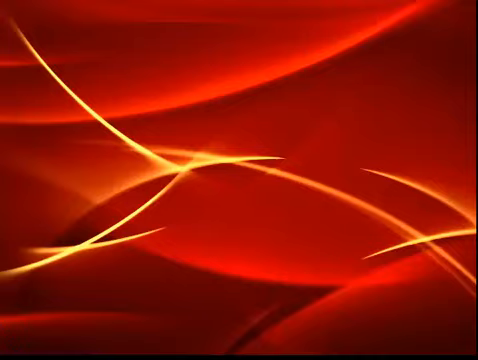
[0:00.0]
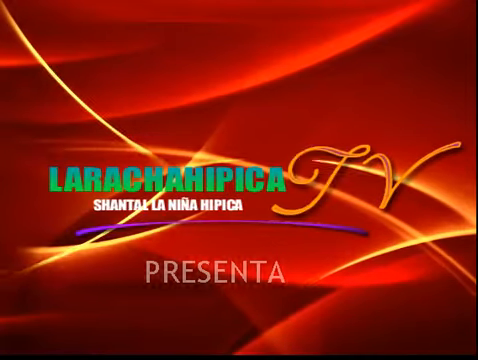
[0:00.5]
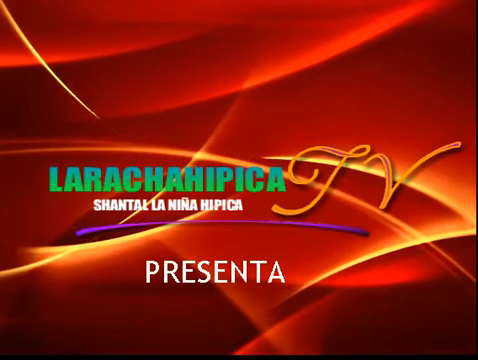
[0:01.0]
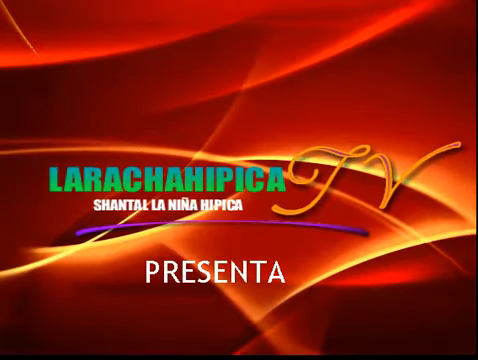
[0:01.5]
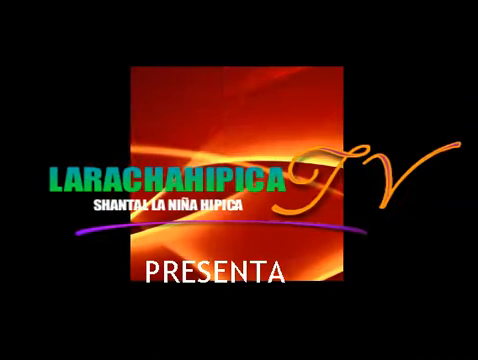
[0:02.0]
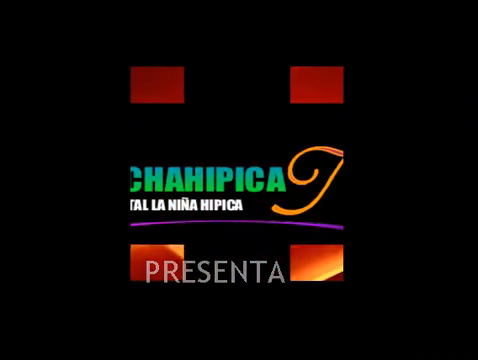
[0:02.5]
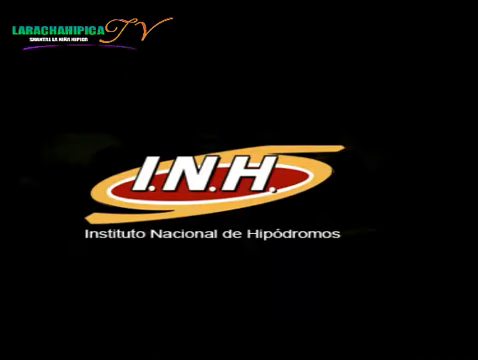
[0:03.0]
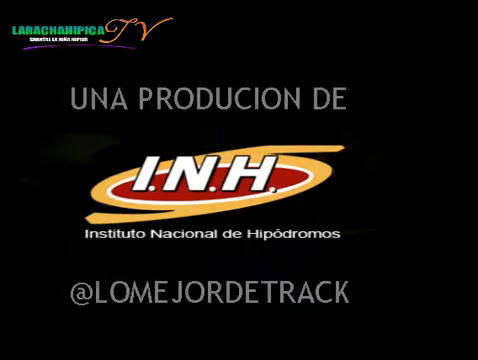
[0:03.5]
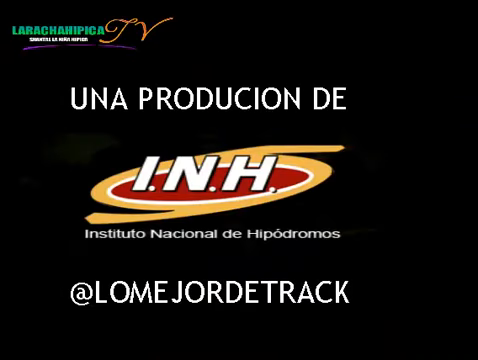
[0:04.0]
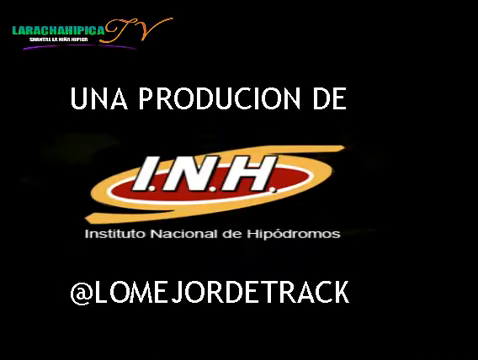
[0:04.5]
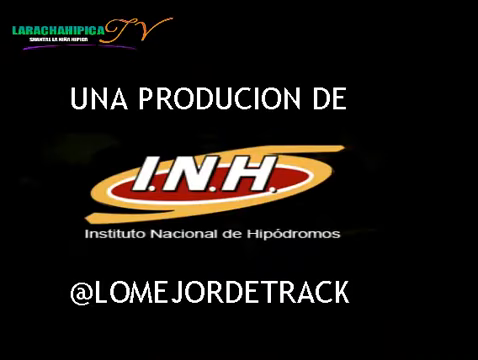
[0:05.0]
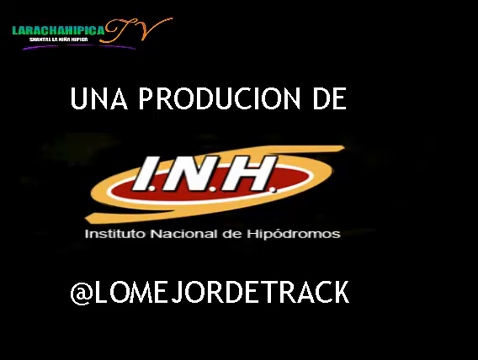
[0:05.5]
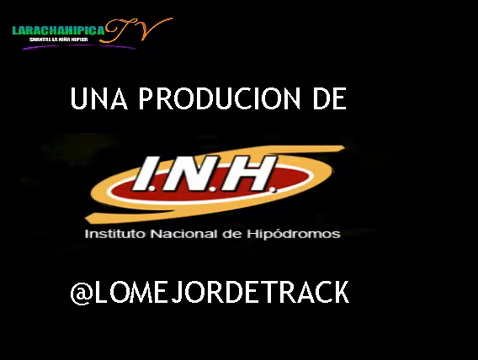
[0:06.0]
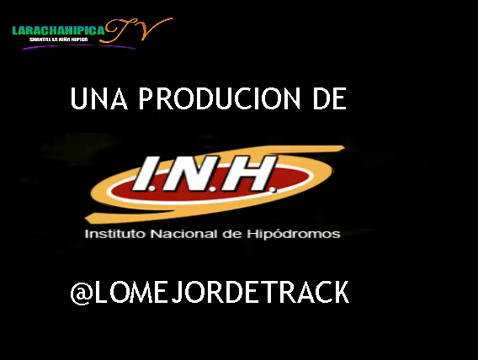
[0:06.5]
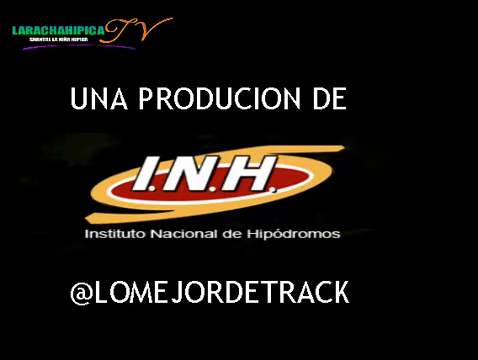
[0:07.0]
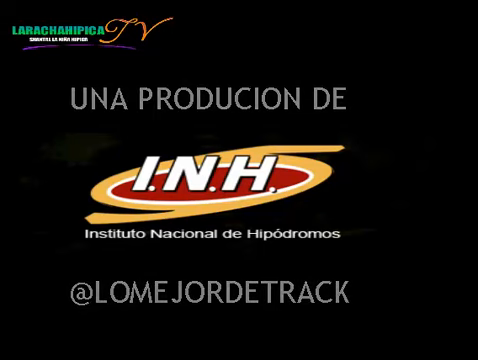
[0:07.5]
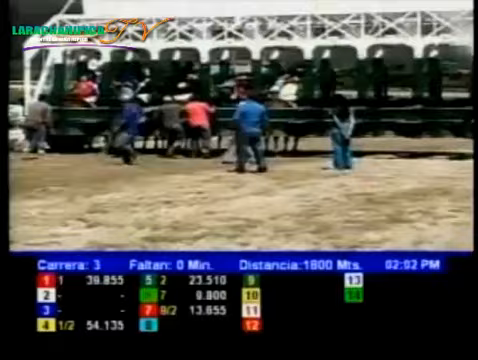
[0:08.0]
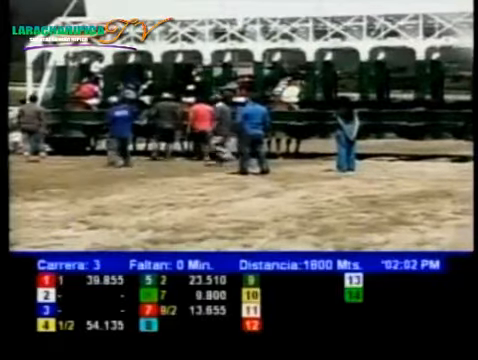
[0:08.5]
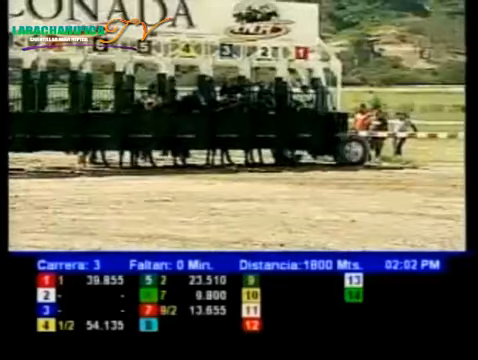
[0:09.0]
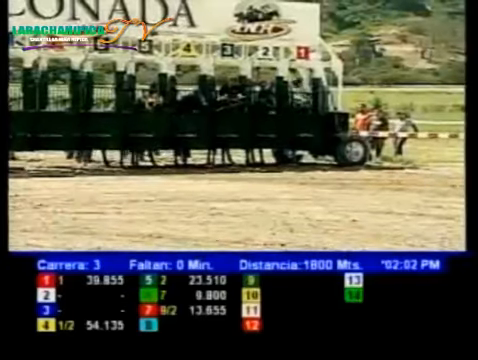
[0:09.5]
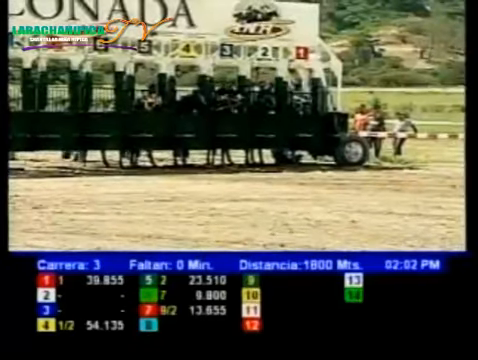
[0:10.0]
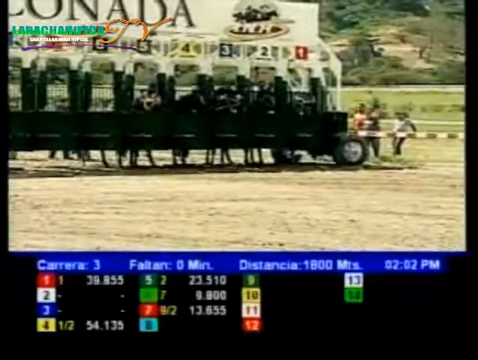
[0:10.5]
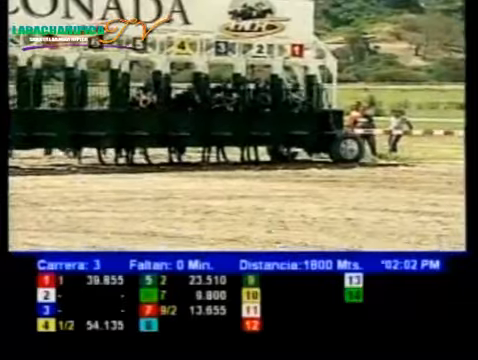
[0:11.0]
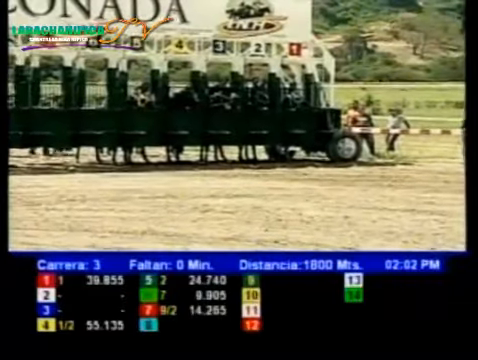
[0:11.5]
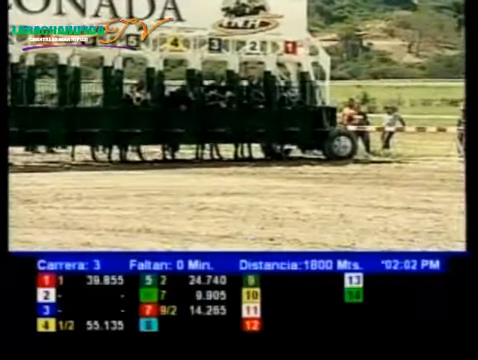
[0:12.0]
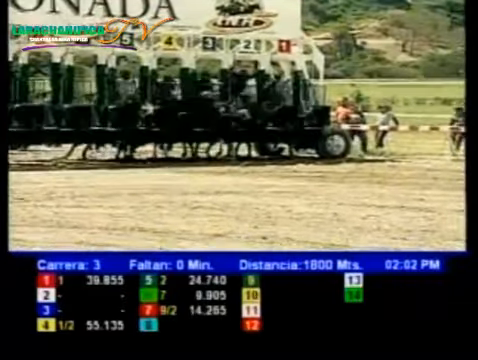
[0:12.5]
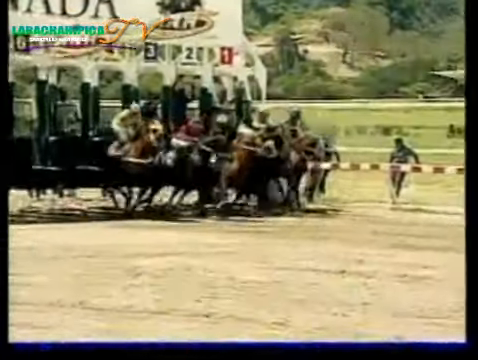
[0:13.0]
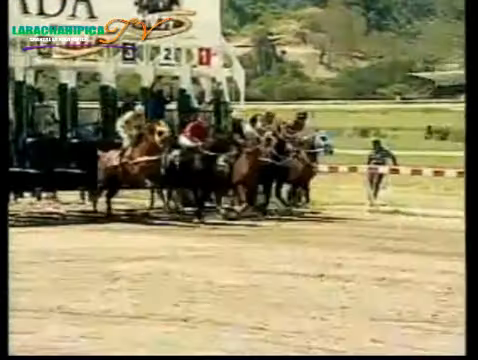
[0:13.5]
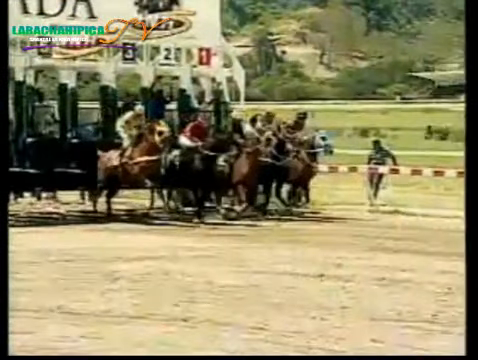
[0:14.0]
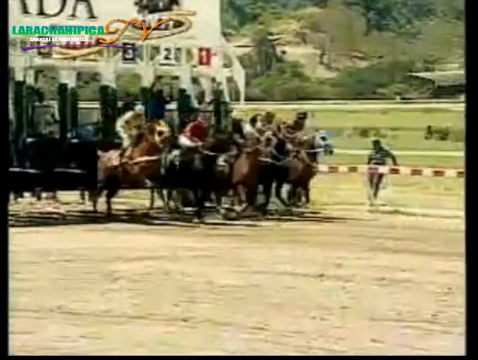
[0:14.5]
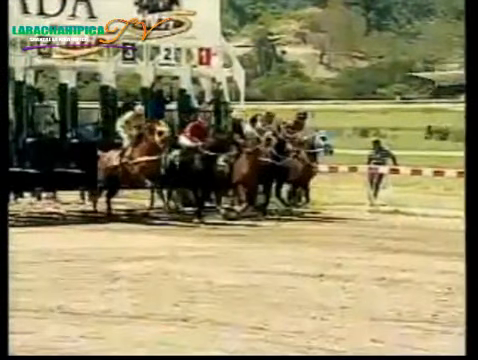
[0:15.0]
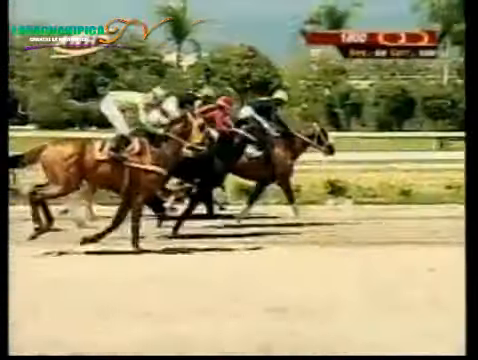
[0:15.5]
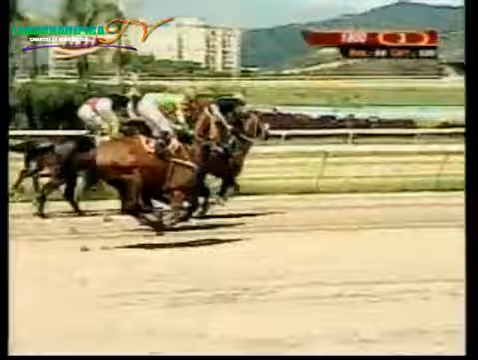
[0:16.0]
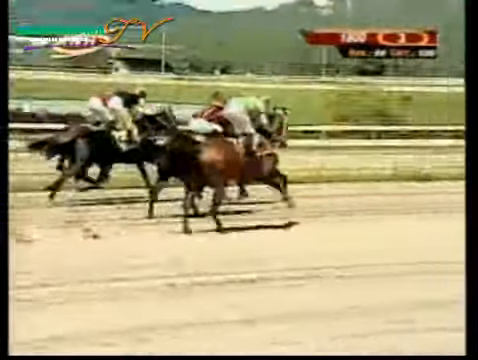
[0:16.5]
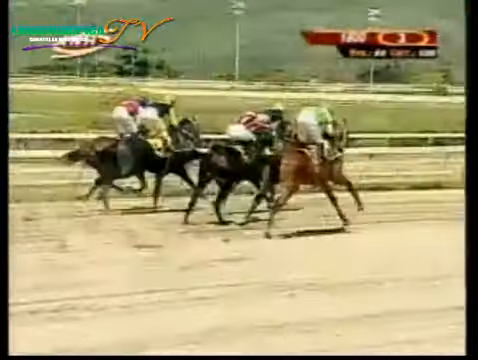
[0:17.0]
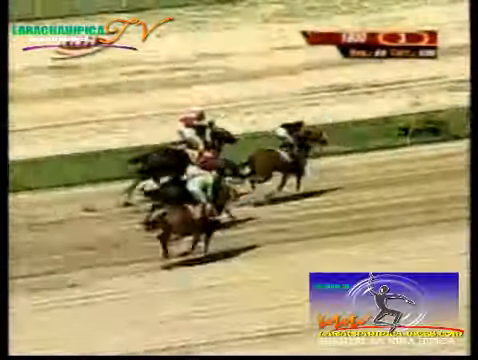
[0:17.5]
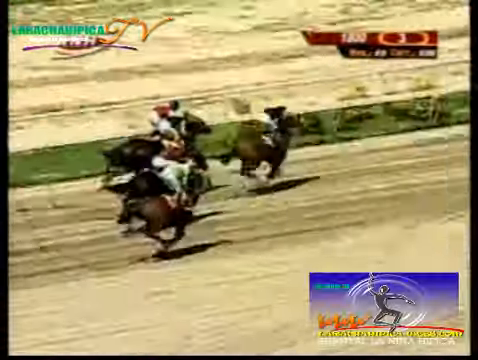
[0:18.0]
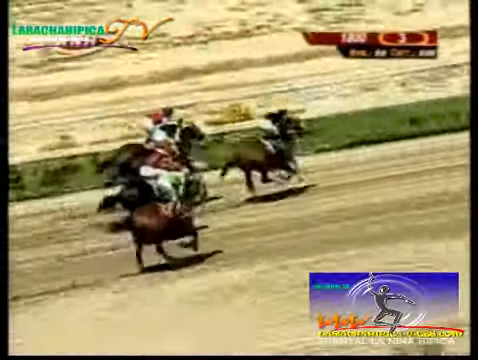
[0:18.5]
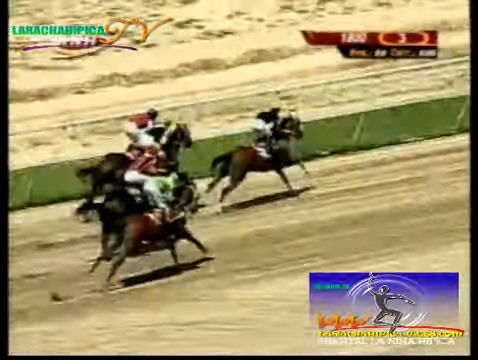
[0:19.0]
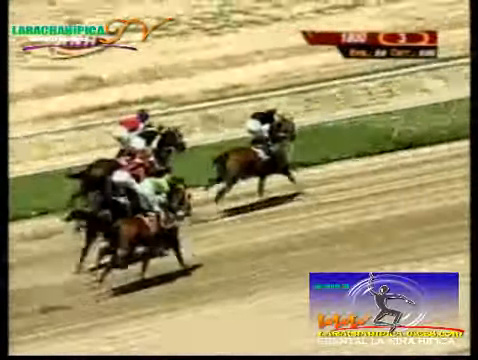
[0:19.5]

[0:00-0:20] The video opens on a screen with dark red linear effects, the red brighter in certain areas, along with some yellow light and text that appears to be in Spanish. The next screen is black with more Spanish text and a gold swirly logo in the center with an inner red circle; it reads "INH". The scene then changes to what looks like the gates for a horse race. The black gates are closed, then suddenly open, and the horses appear to be off. The horses are shown first from a back angle and then from more of an upper angle looking downward. There appear to be five horses in total: one is out in the lead, one is in second place, and the other three seem to be roughly side by side as the race starts.